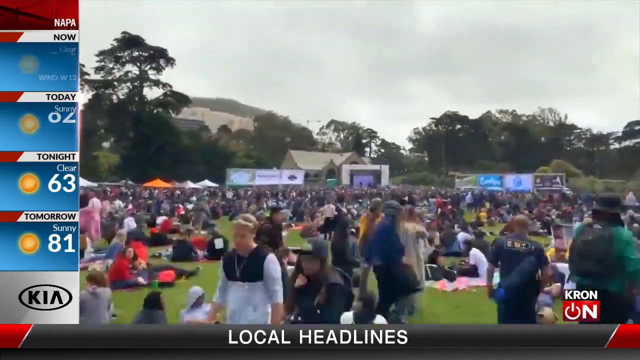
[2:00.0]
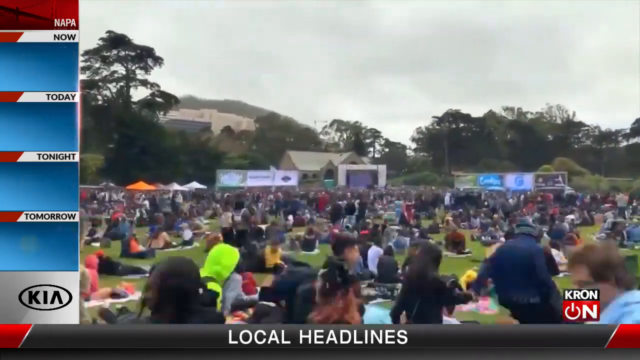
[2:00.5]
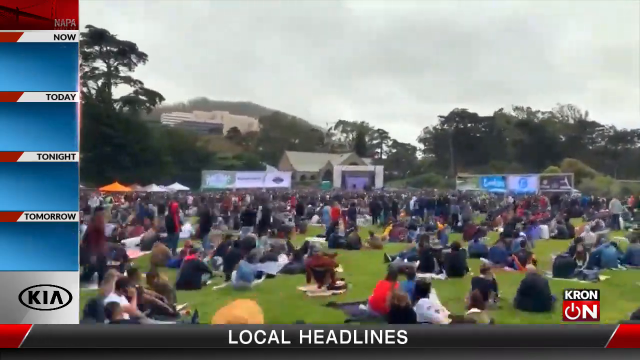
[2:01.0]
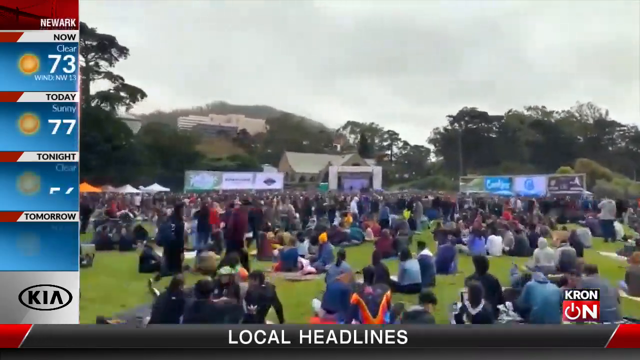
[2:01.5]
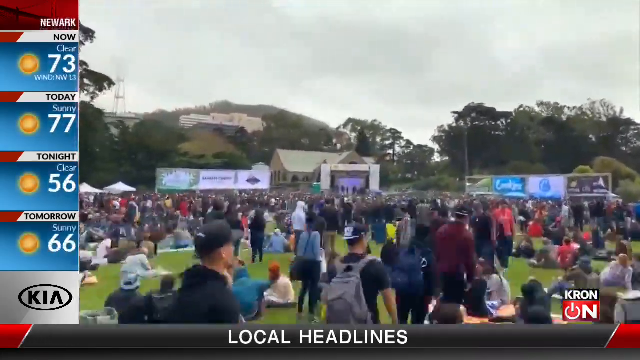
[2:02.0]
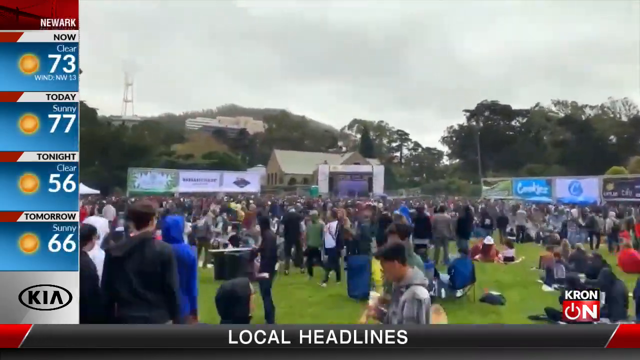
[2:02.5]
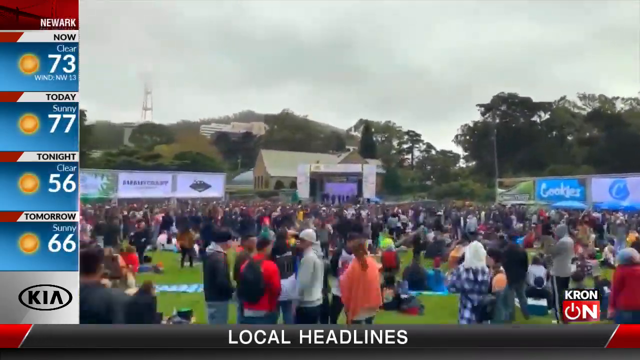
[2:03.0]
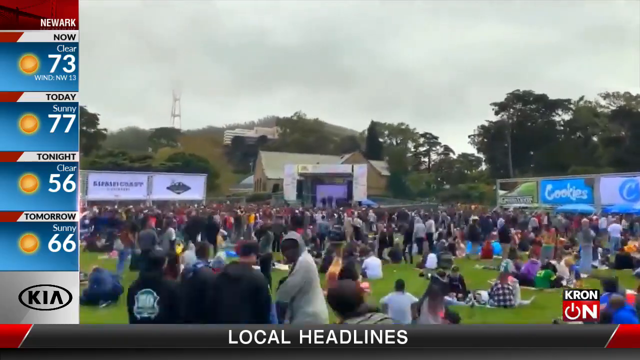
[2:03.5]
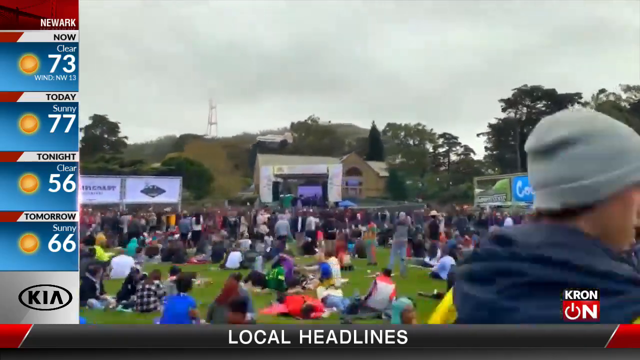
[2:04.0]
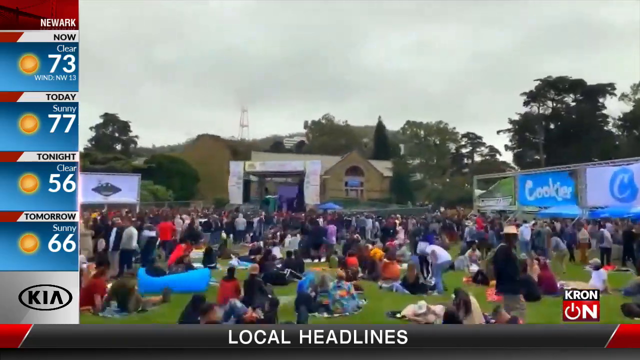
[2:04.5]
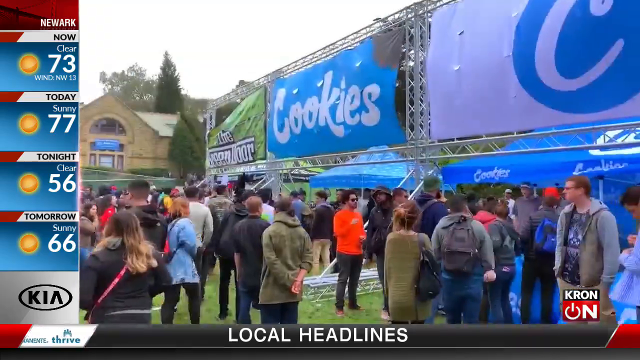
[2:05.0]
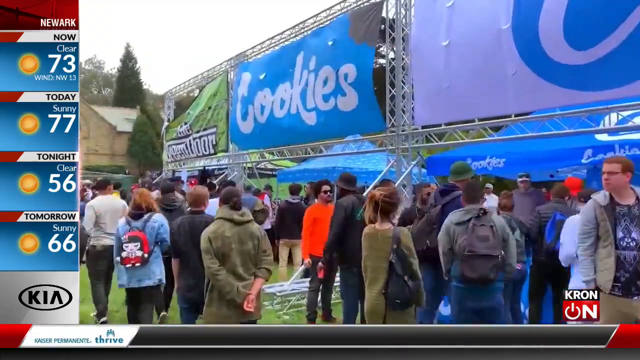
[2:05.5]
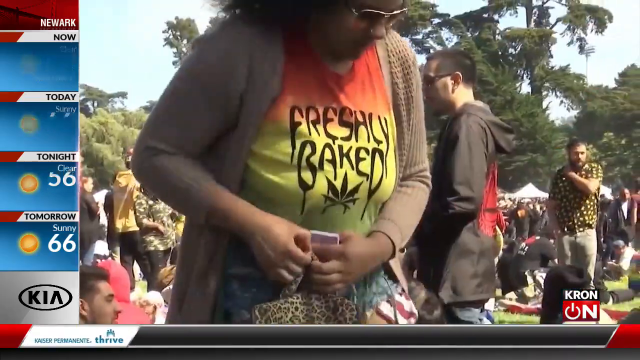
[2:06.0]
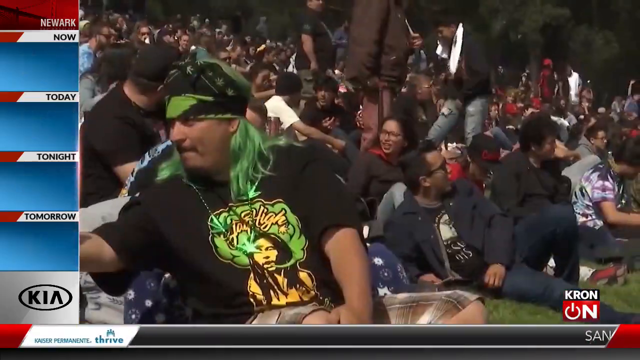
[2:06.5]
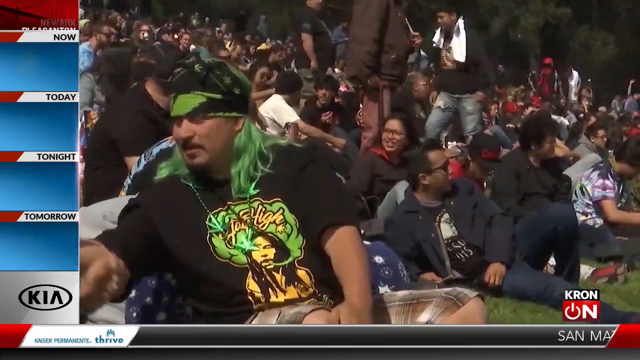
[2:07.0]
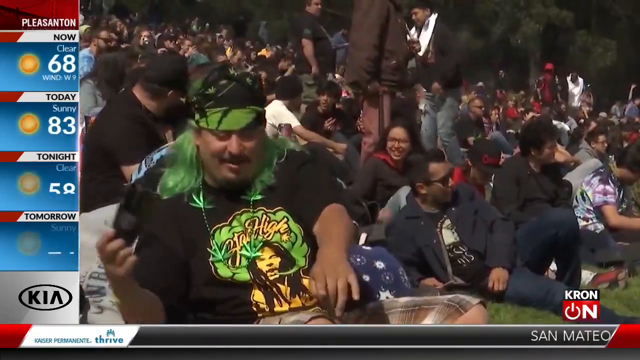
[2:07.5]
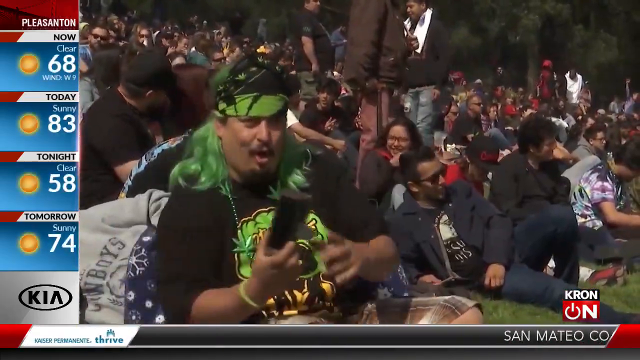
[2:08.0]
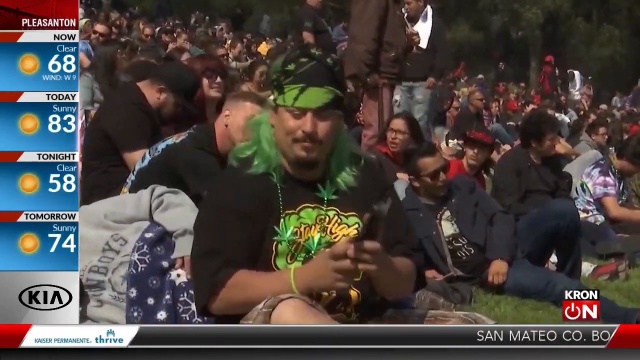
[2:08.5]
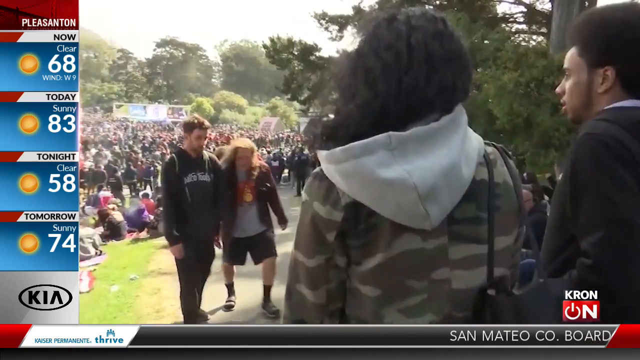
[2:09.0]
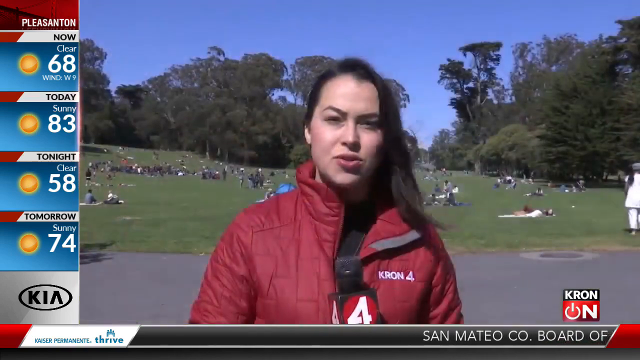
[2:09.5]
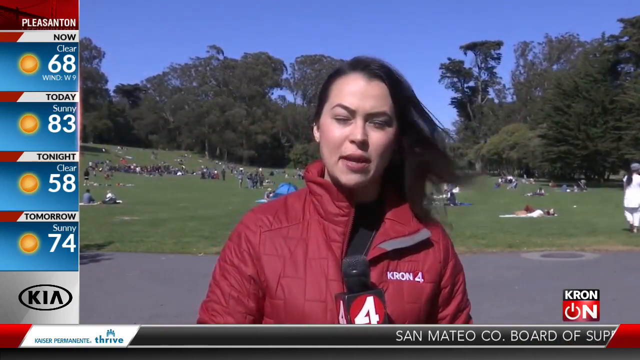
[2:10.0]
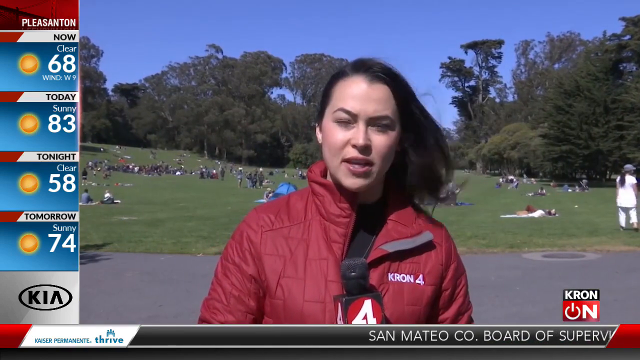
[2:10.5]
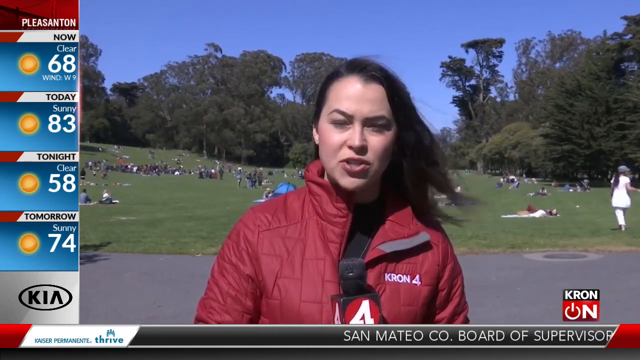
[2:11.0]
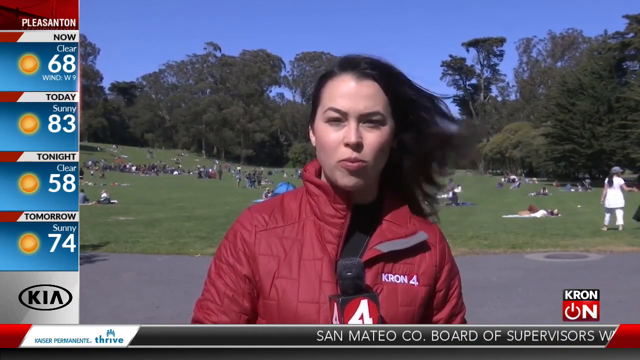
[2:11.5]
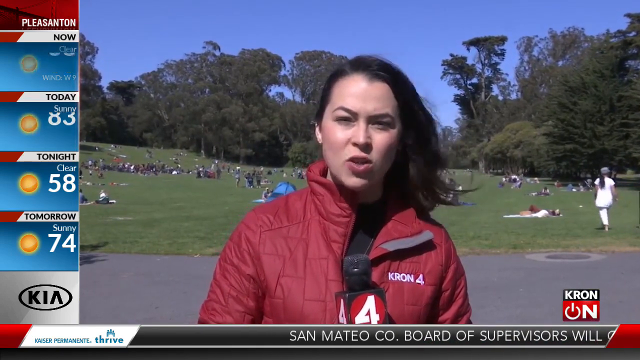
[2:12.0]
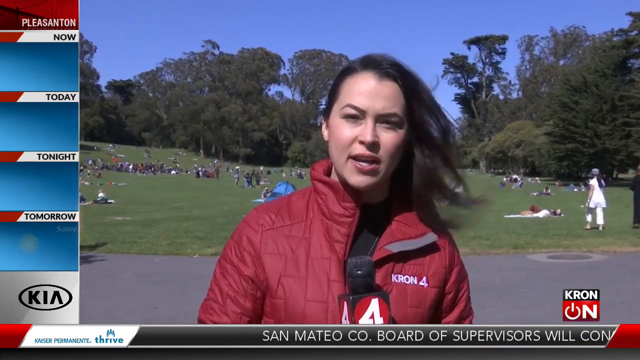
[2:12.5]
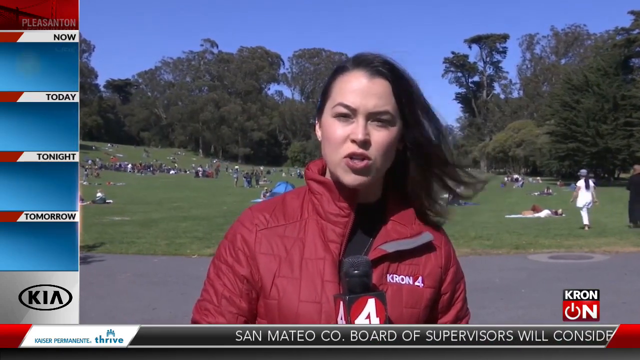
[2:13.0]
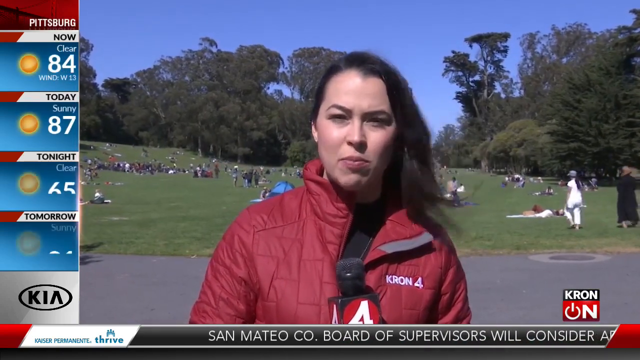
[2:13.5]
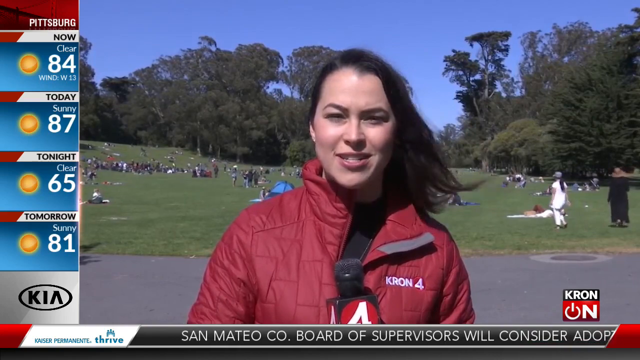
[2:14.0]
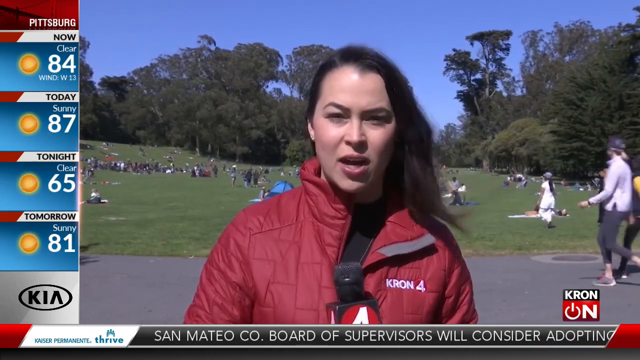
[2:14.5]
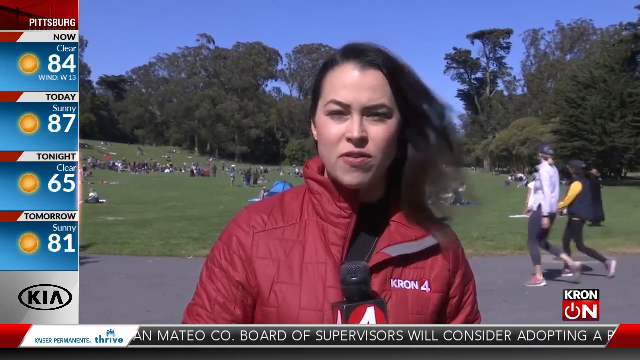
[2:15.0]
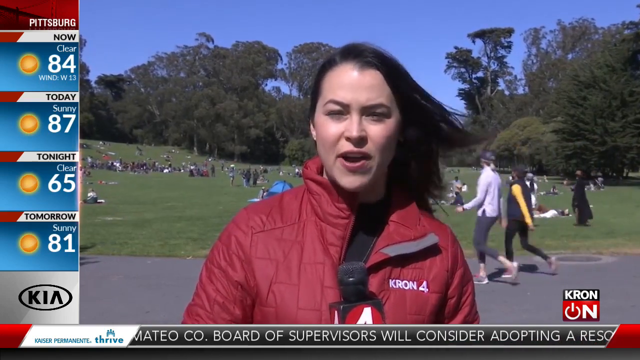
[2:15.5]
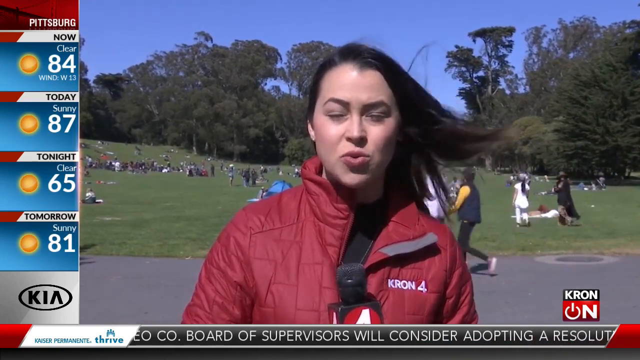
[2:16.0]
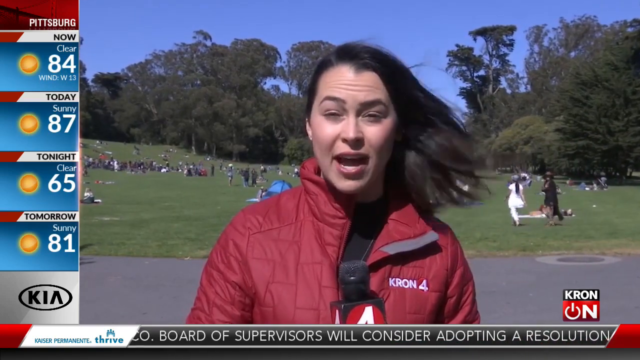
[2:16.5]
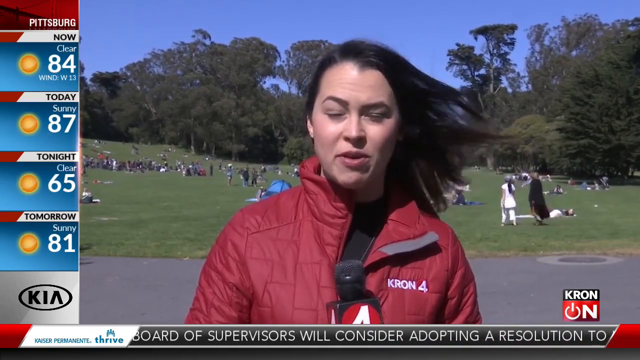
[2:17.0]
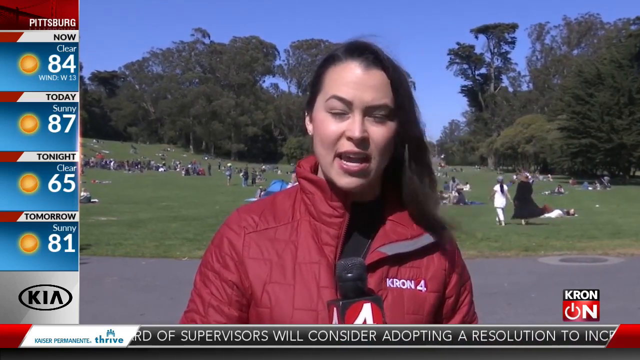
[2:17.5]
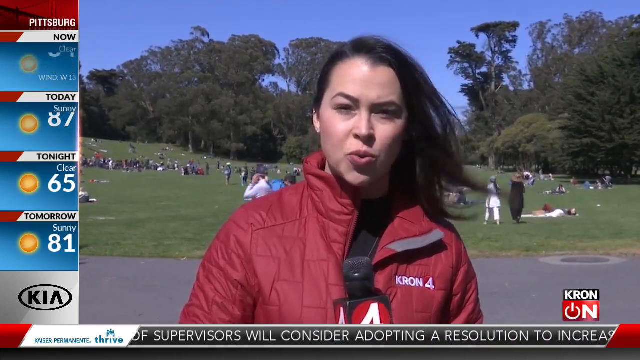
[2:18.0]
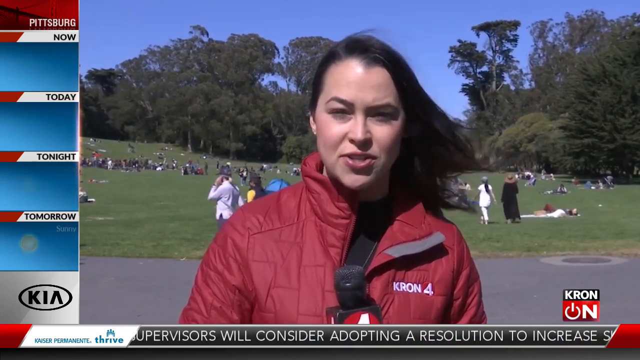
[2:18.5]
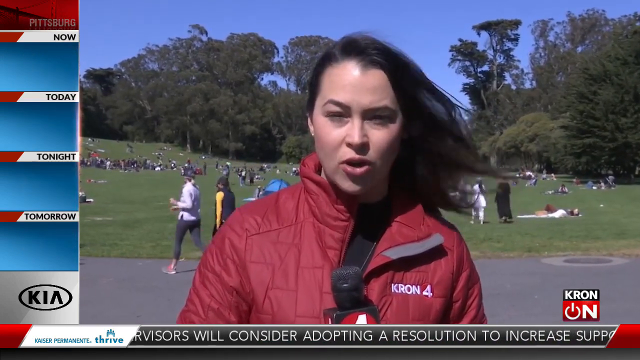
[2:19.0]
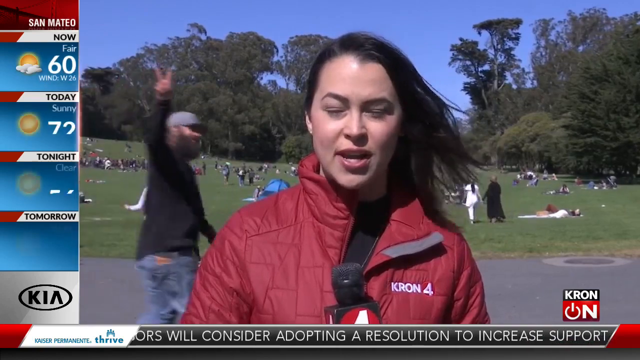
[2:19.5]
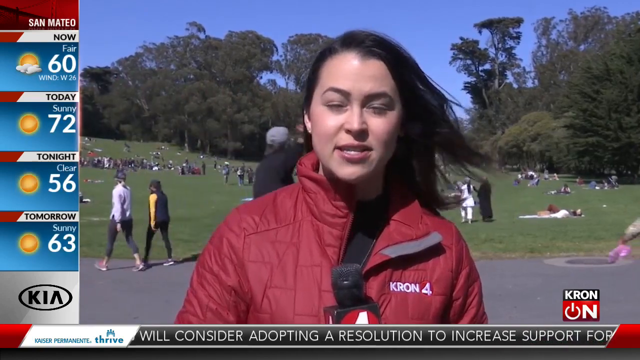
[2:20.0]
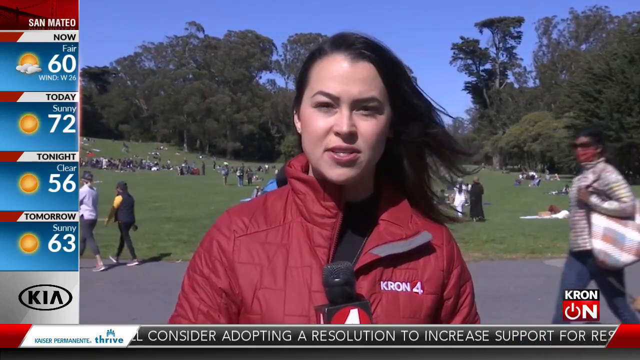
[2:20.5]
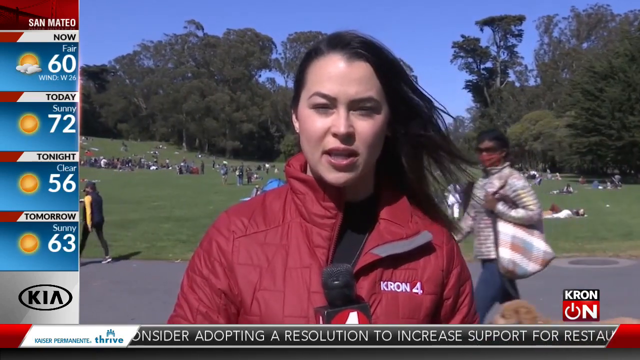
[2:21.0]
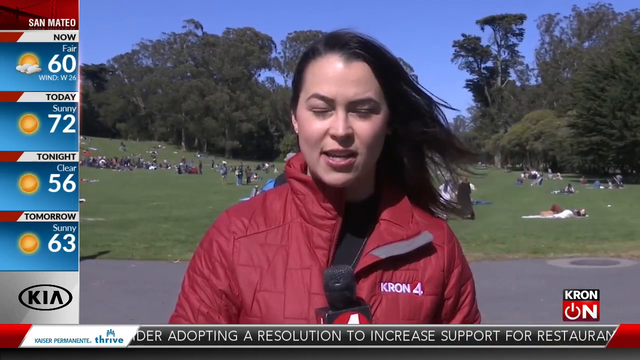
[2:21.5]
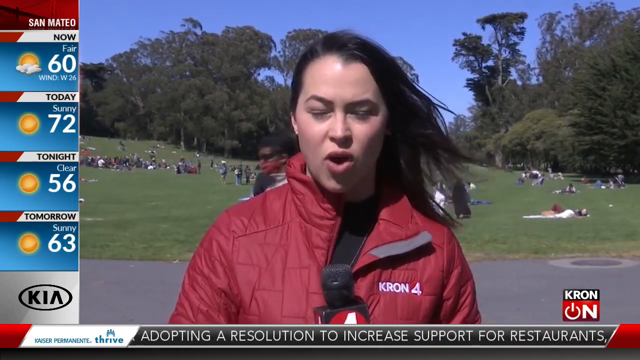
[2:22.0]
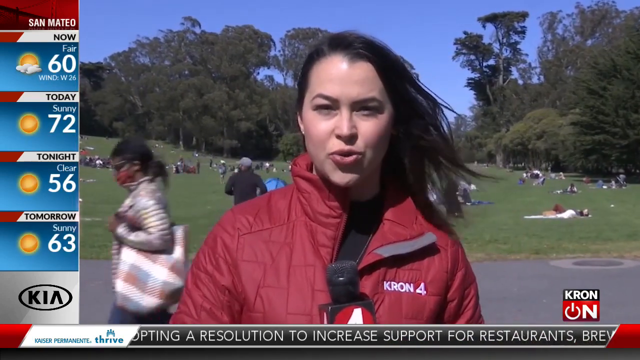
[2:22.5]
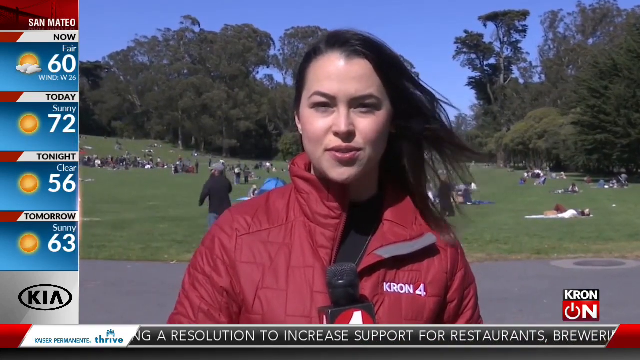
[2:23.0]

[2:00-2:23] A crowd of people looks like it is attending an event. Some people pass by closer to the camera, while people behind them sit on the grass, and there are groups of people. The number of people cannot be determined. A woman appears who seems to be a presenter, and a woman is shown sitting in front of a picture of a bridge. The crowded area is full of smokers, who look intoxicated.